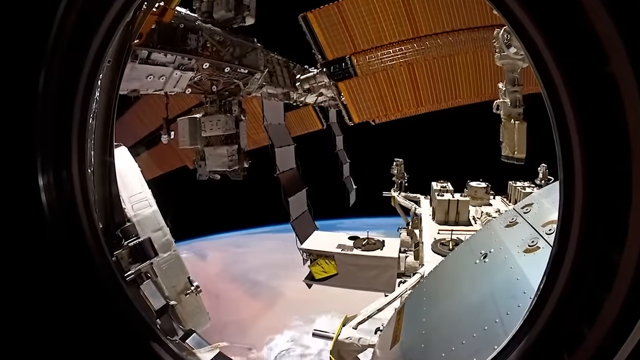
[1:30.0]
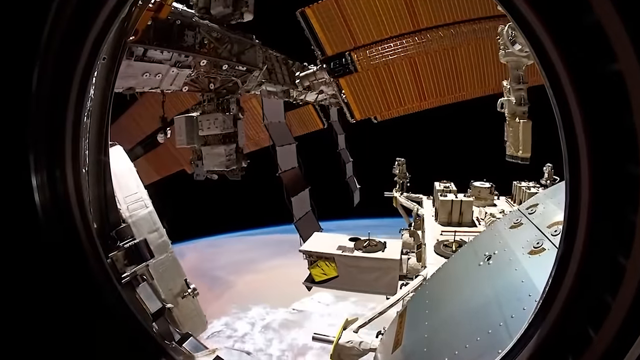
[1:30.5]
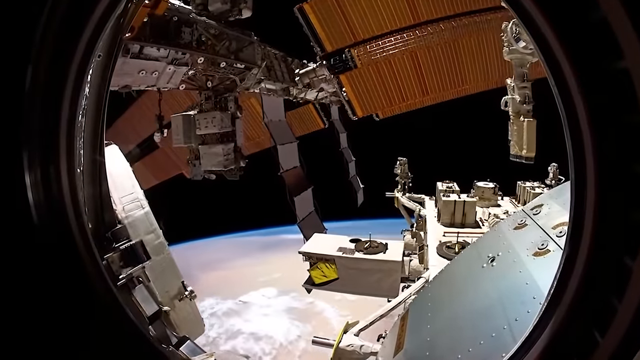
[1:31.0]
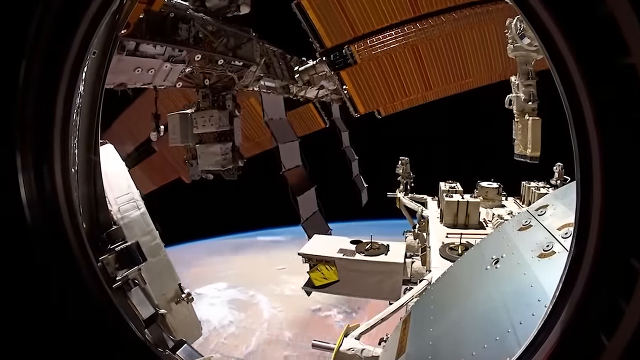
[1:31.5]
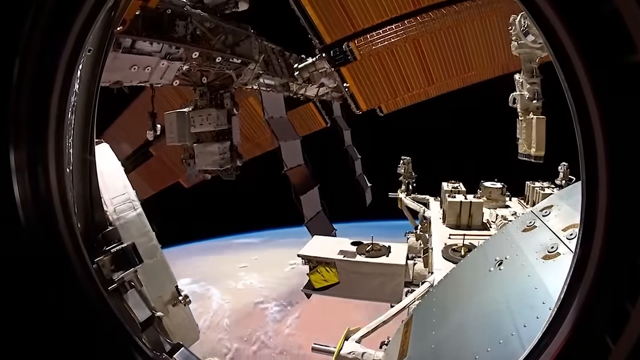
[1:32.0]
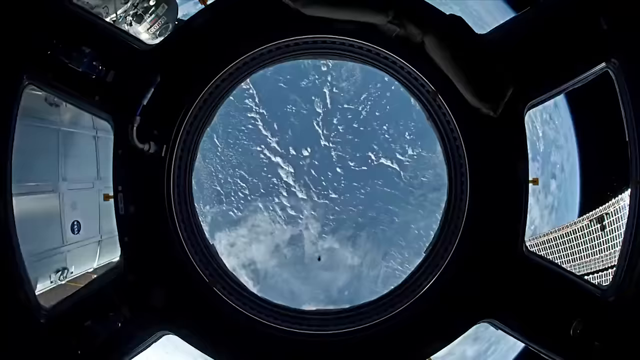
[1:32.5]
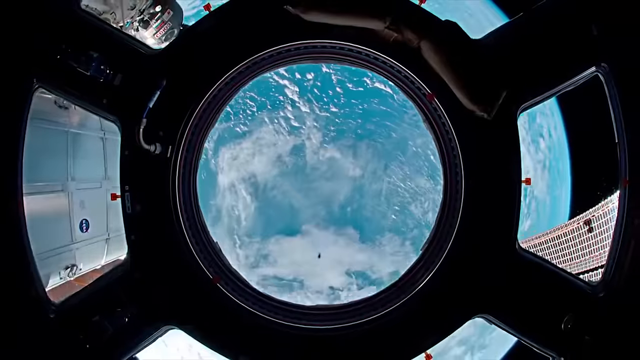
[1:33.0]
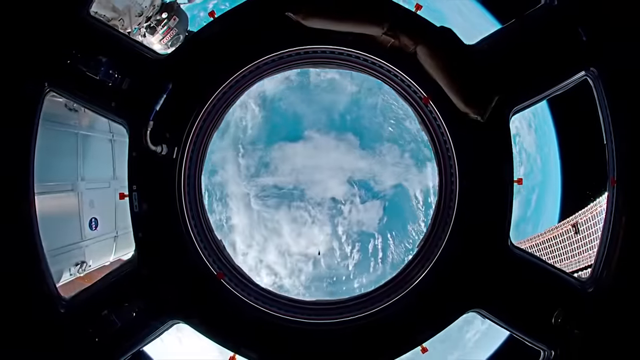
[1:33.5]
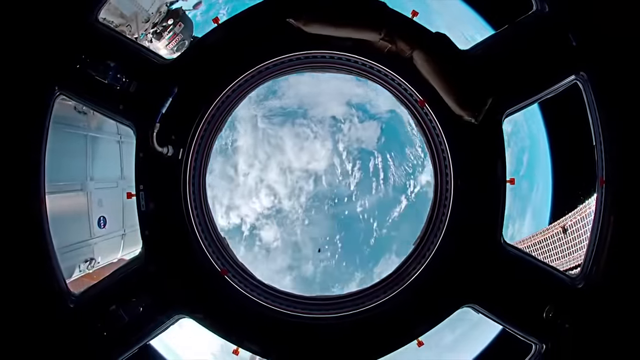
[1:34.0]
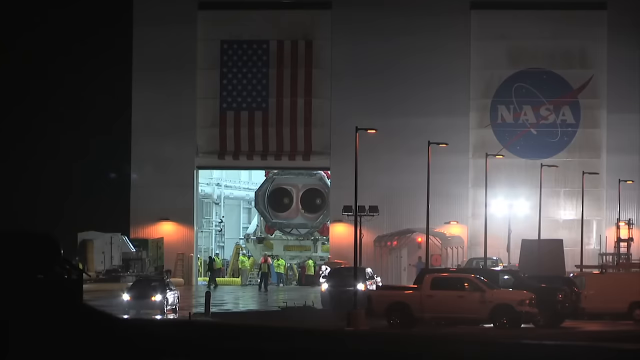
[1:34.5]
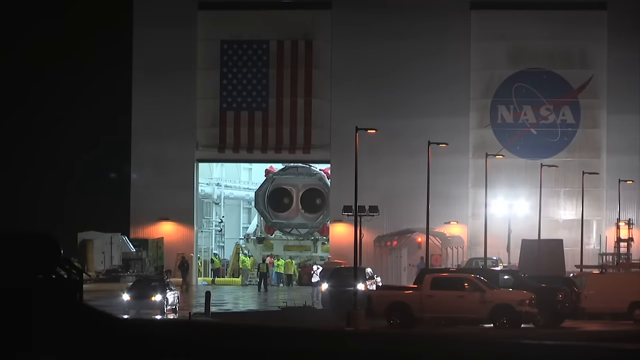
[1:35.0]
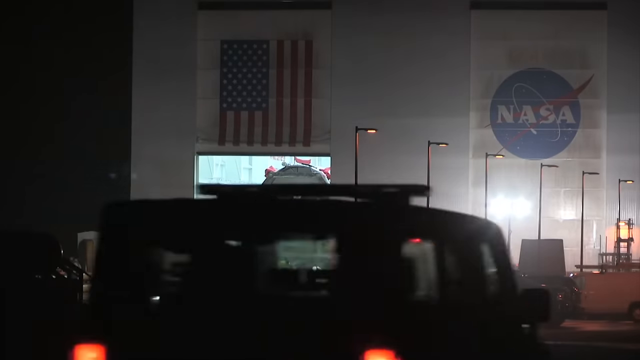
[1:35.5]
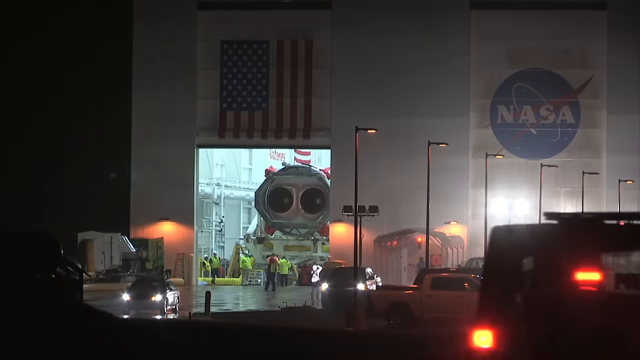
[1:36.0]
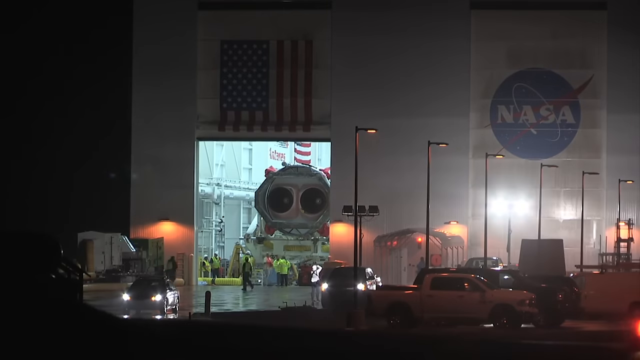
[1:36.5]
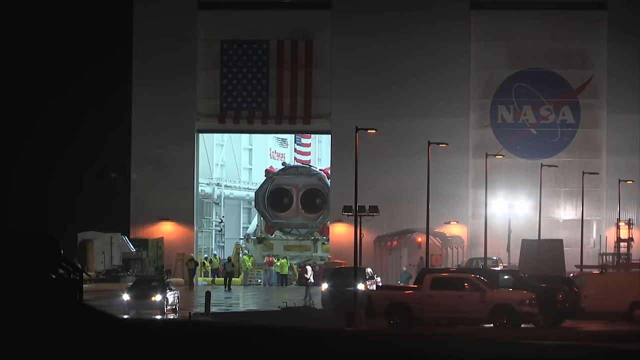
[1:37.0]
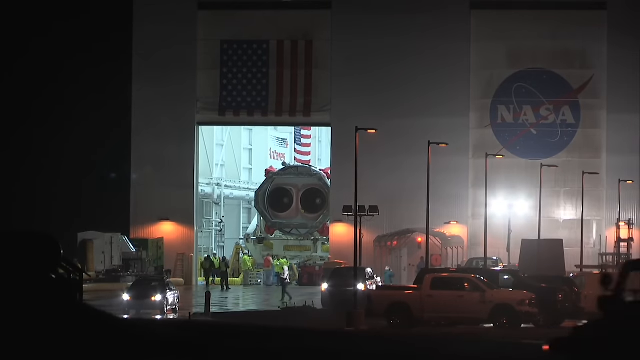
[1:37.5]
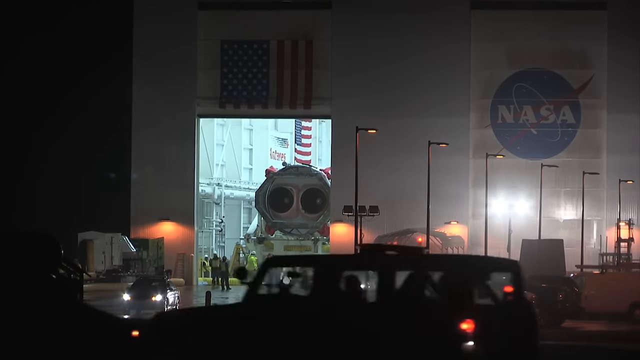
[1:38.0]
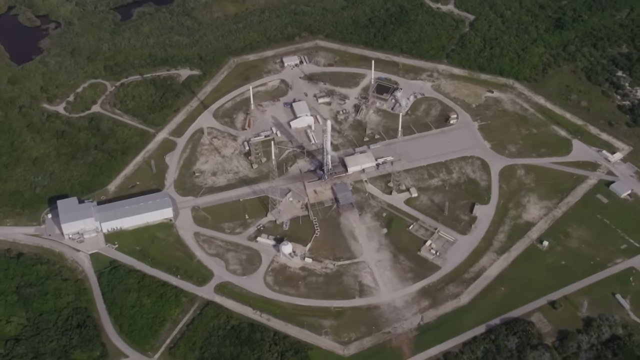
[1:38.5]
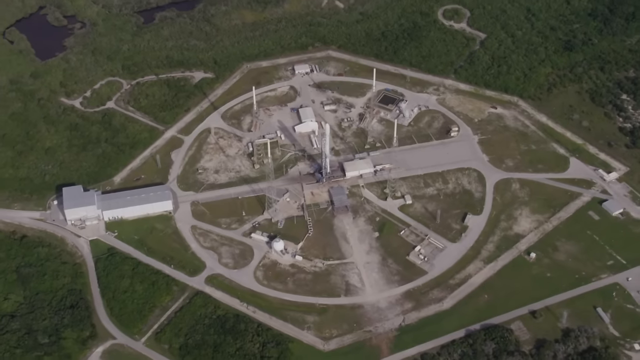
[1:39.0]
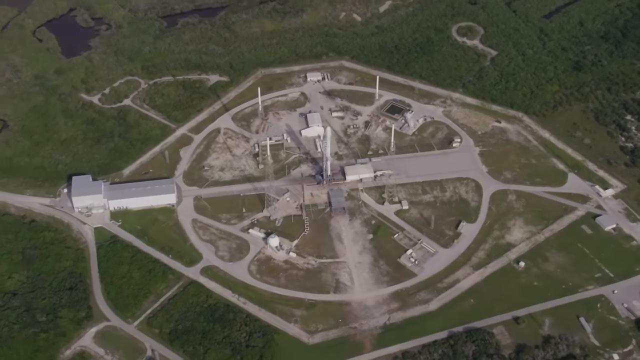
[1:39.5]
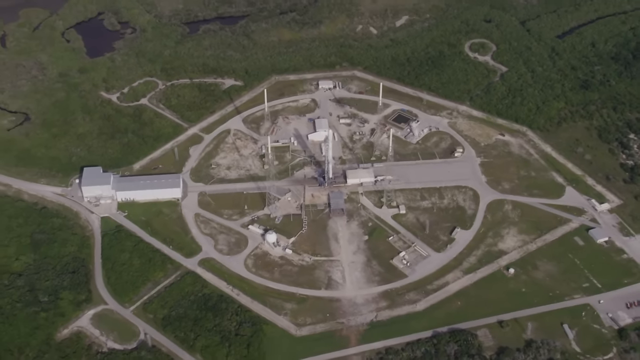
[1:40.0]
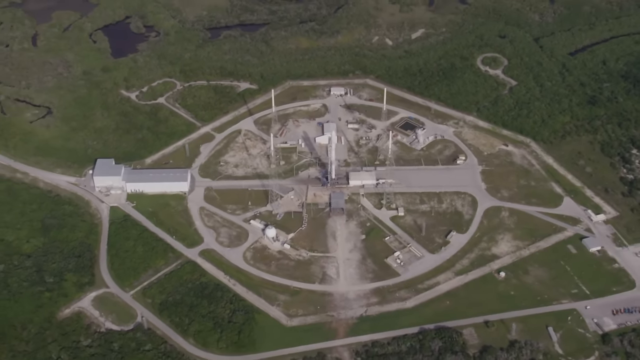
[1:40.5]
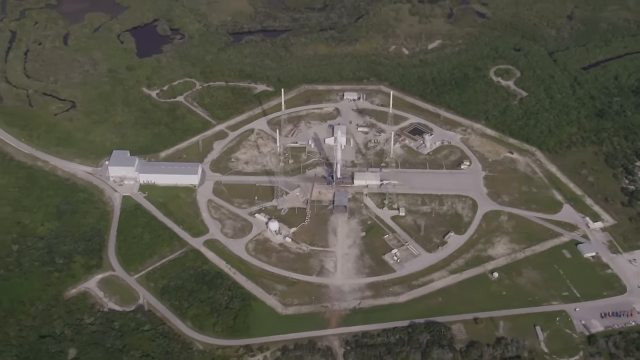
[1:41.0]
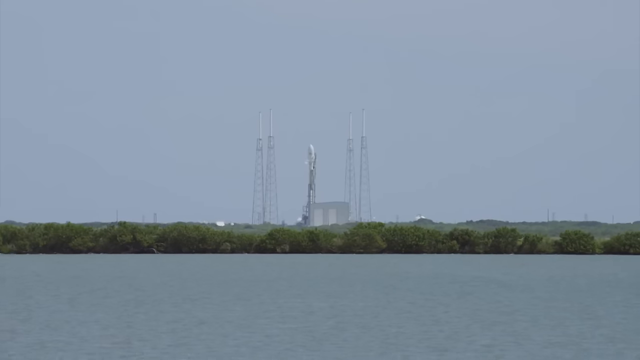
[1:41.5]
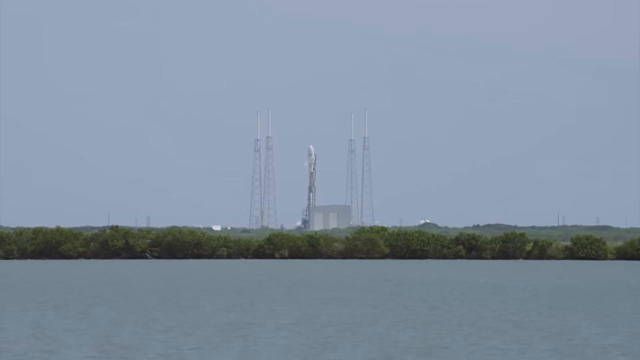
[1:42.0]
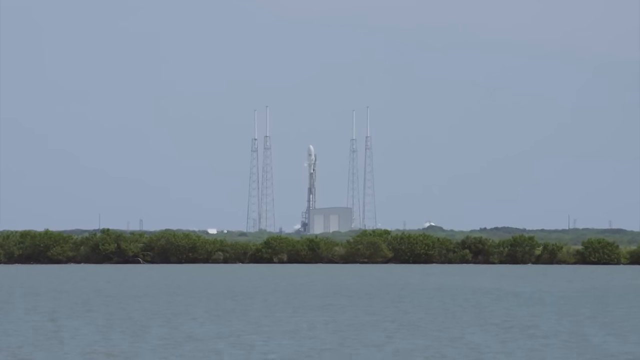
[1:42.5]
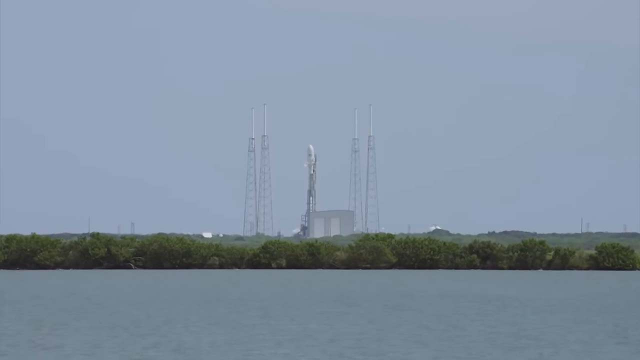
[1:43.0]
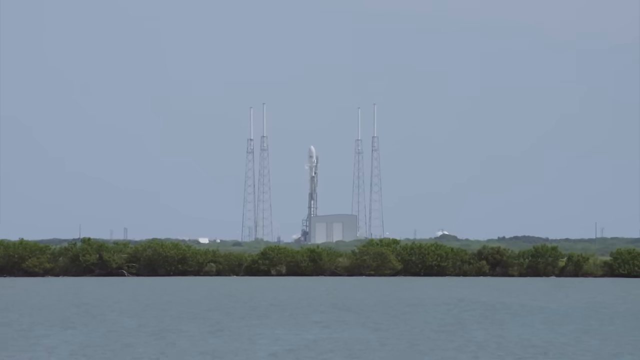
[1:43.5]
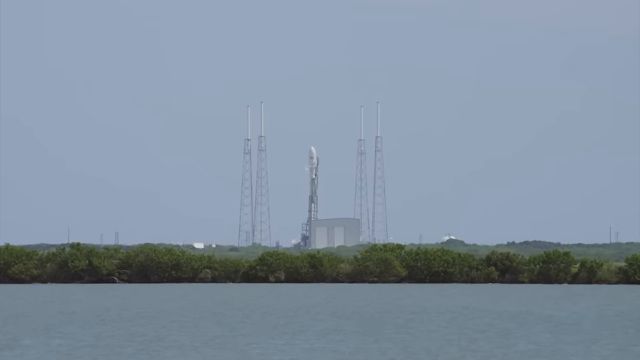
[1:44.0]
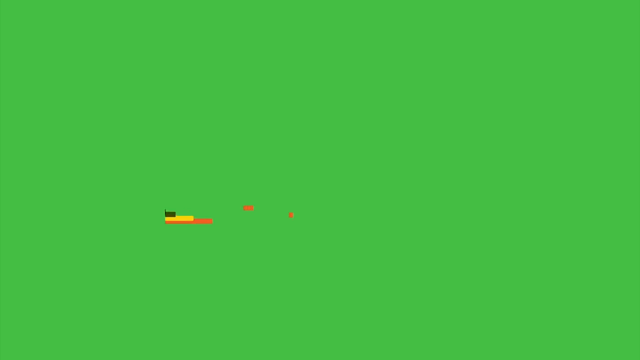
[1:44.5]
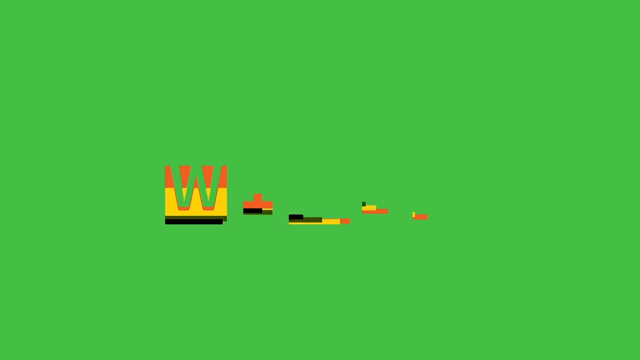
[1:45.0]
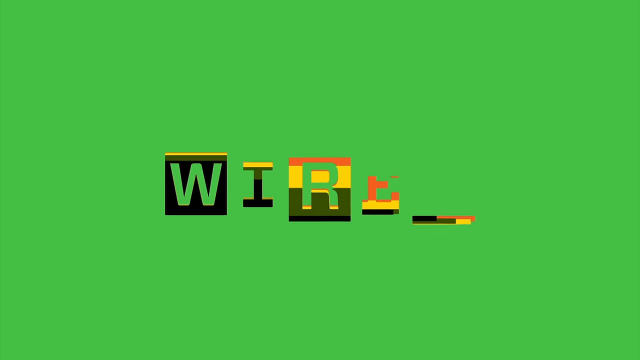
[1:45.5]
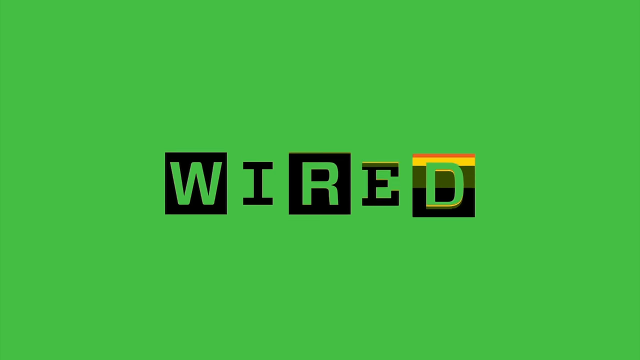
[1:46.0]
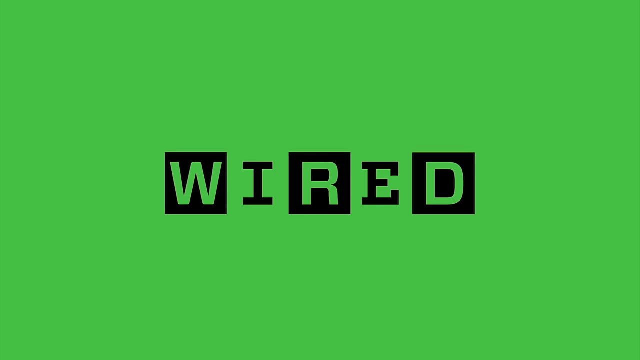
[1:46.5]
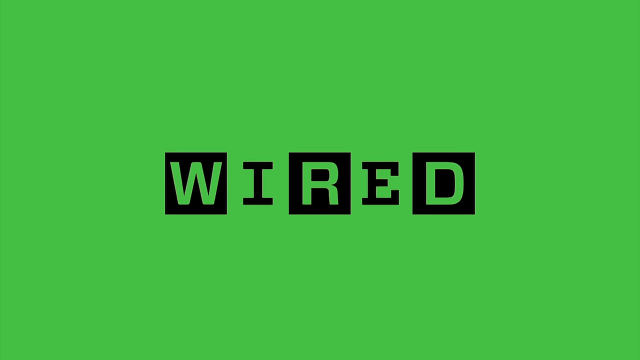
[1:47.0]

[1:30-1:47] The view seems to look out of a spaceship window into space, where there are many metal arms with large orange rectangular flaps. At the bottom right are what look like more mechanical objects, cylinders and boxes, with the Earth below. The Earth, blue with white clouds, rolls from right to left at the bottom of the frame. The scene changes to what looks like a view from inside a capsule out of a window, with a circle in the middle and windows surrounding it; the Earth, white and blue, rotates upward. Next, there appears to be a very large building with a blue NASA symbol, "N-A-S-A" in white on a blue circle, on the right side. On the left side, a very large garage door slowly rolls upward, with an American flag on top of it. Inside the garage appears to be the backside of a rocket, with two large thrusters facing directly toward the viewer. Below, a group of people in yellow jackets walk around and do things. Then comes what looks like an overhead view looking down on a rocket about to take off, standing vertical with four towers, one on each corner; the view expands in a counterclockwise fashion. The video then moves to ground level, showing the rocket in the middle of the four towers. The outro screen is green, and the letters "W-I-R-E-D" slowly come in one by one; the W, R and D have a black background and are white in the middle.